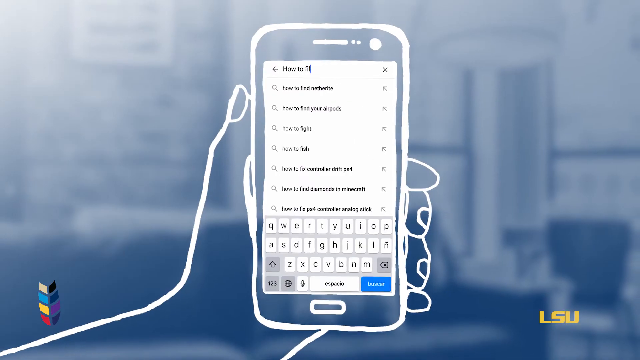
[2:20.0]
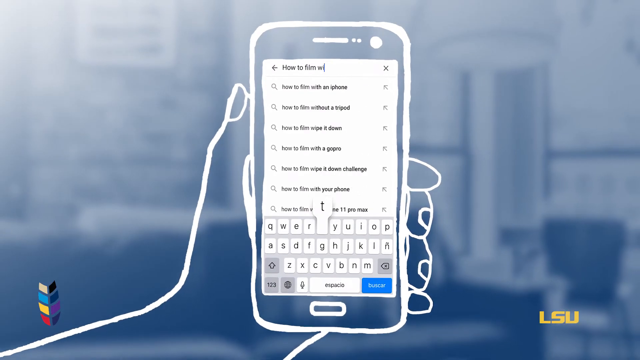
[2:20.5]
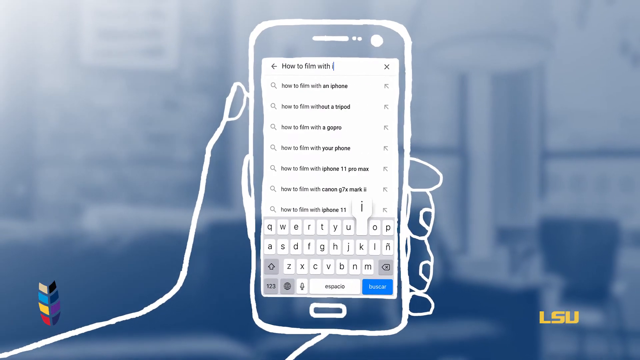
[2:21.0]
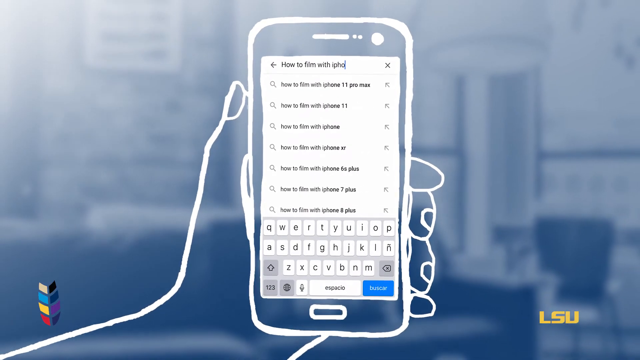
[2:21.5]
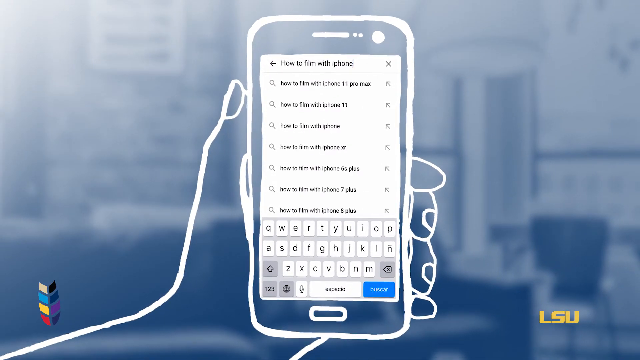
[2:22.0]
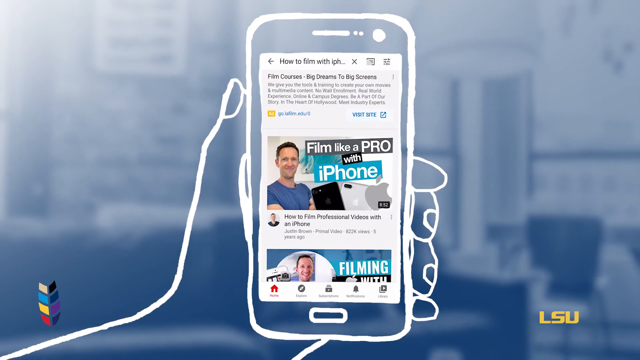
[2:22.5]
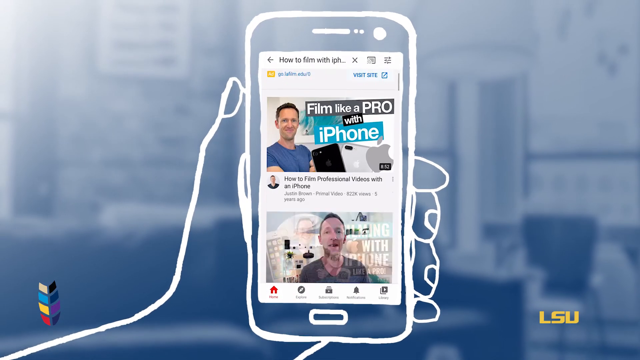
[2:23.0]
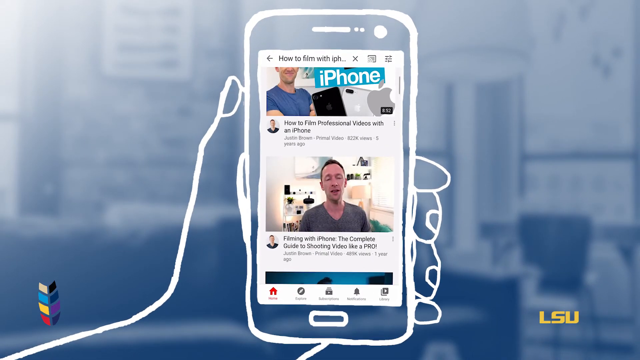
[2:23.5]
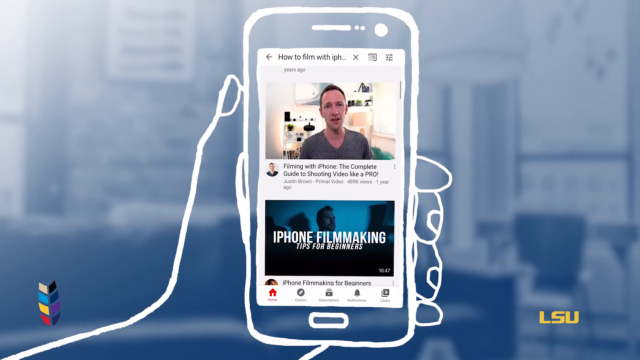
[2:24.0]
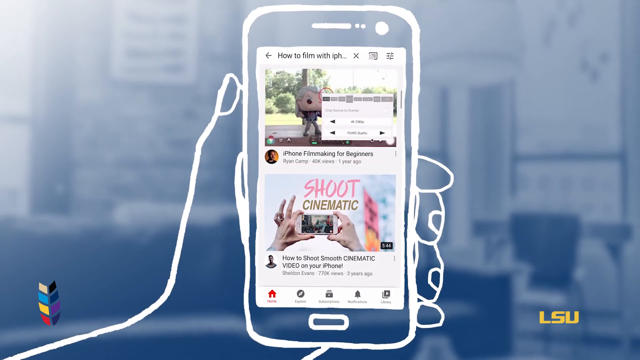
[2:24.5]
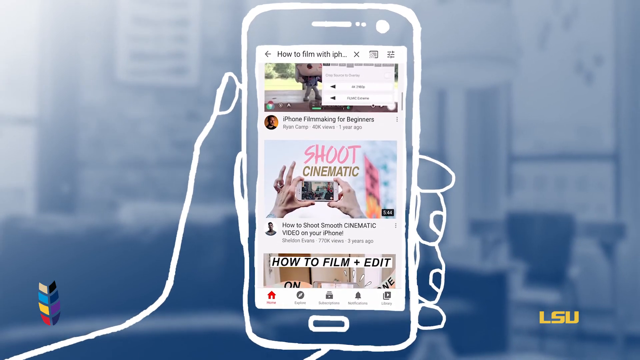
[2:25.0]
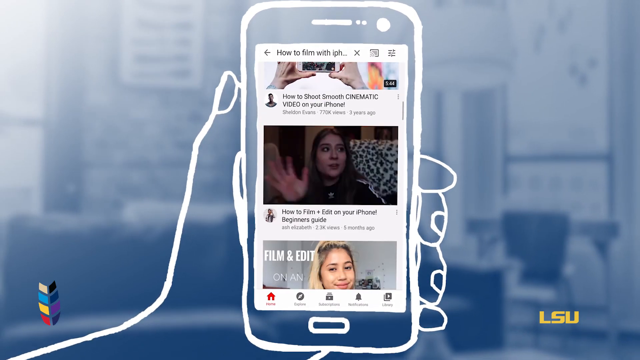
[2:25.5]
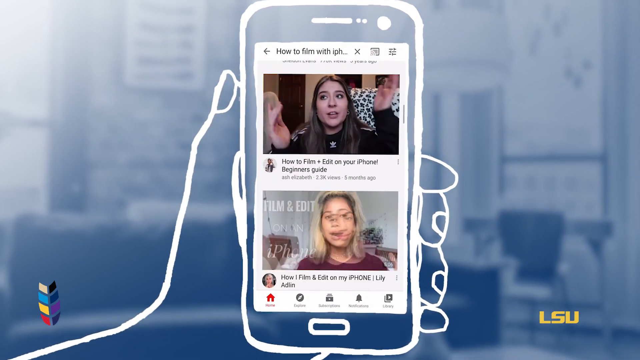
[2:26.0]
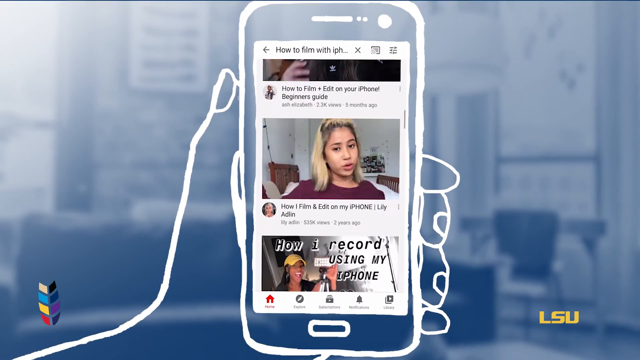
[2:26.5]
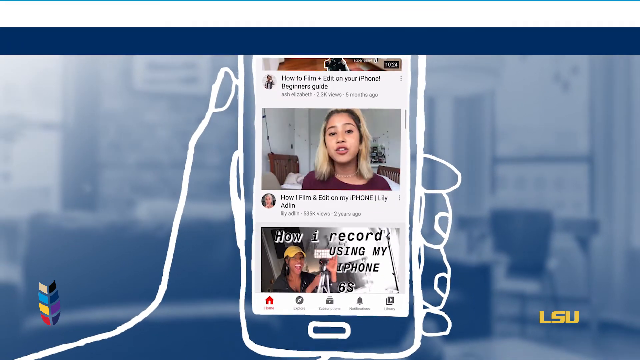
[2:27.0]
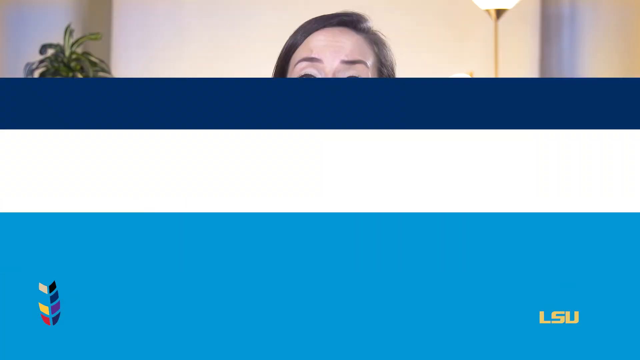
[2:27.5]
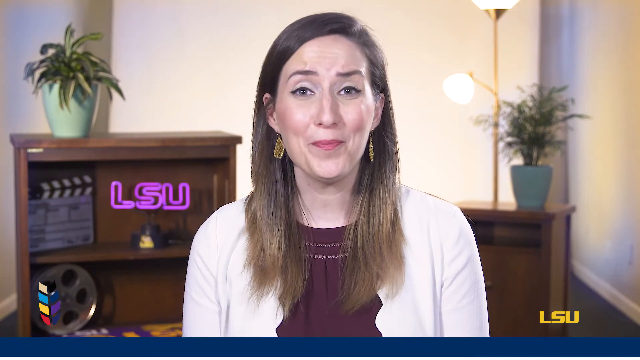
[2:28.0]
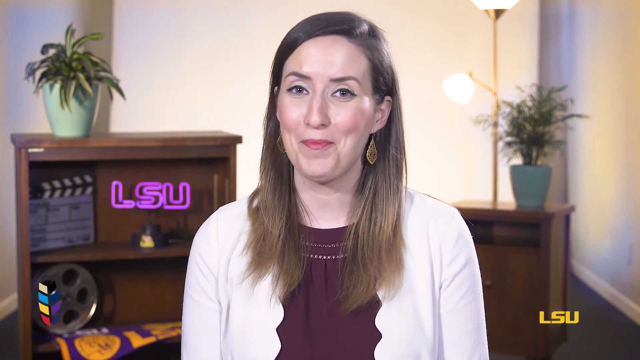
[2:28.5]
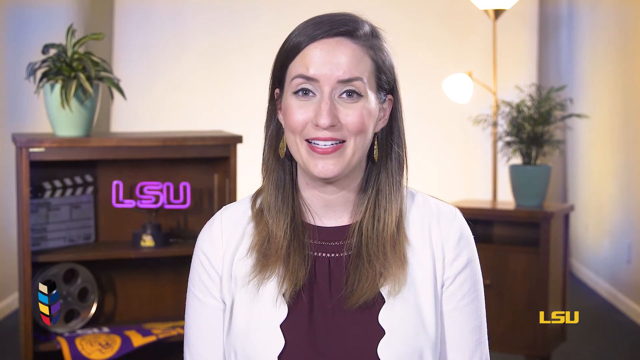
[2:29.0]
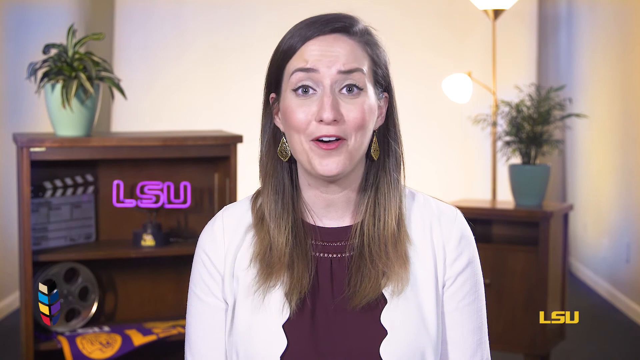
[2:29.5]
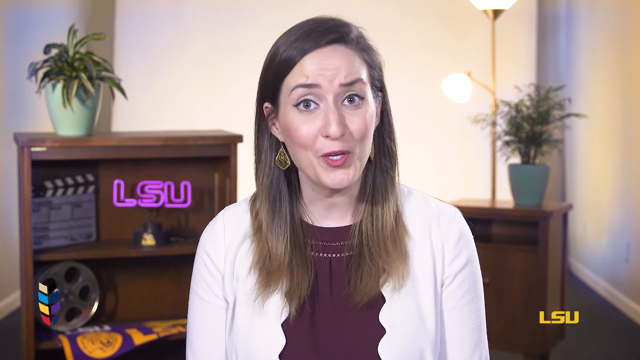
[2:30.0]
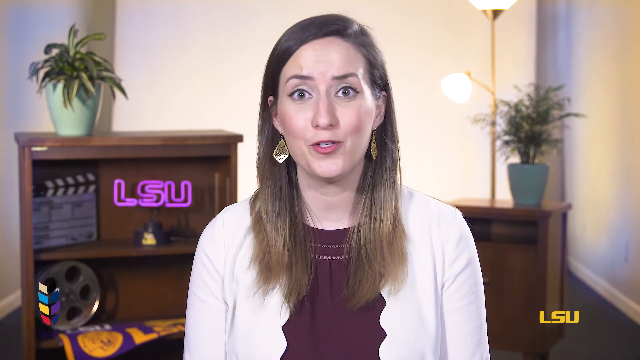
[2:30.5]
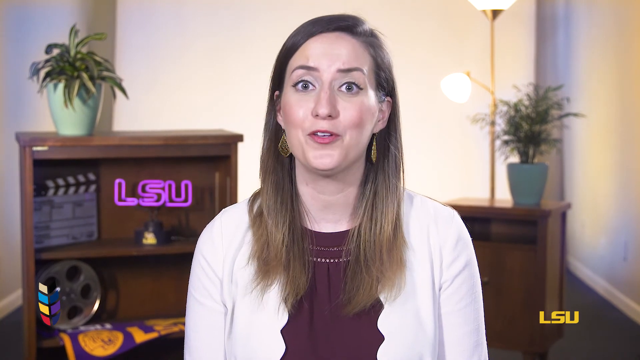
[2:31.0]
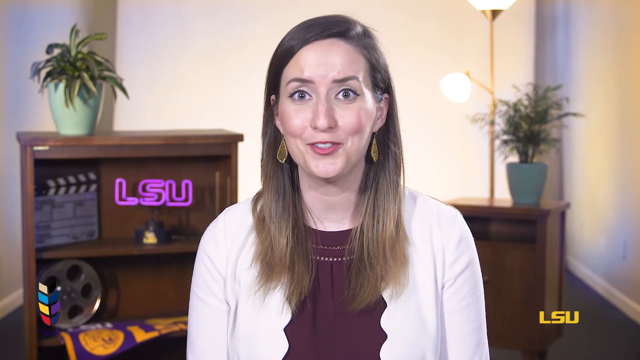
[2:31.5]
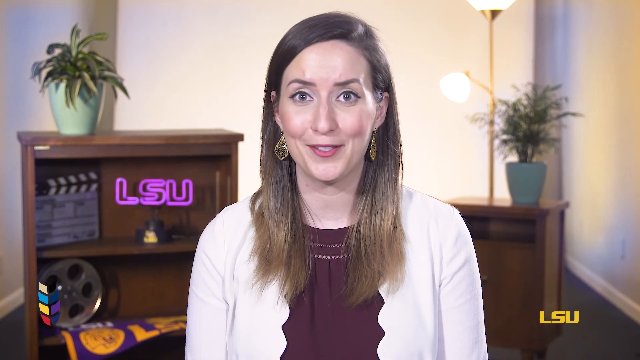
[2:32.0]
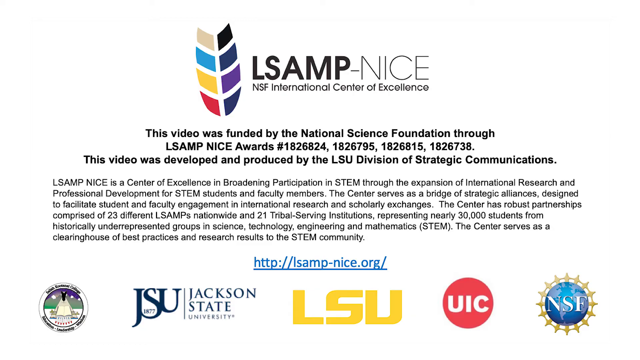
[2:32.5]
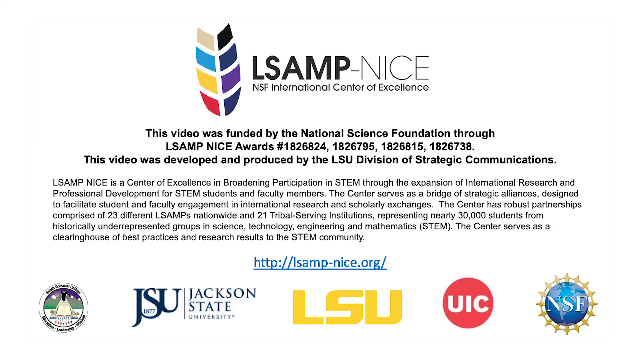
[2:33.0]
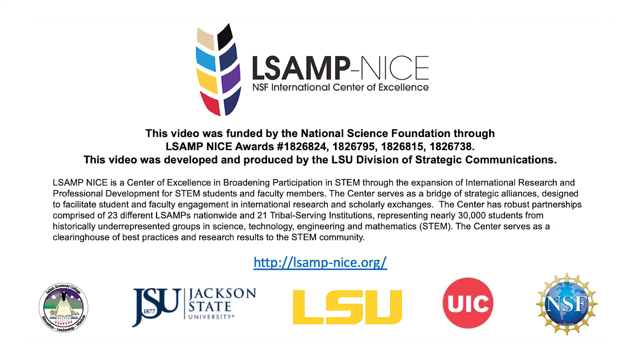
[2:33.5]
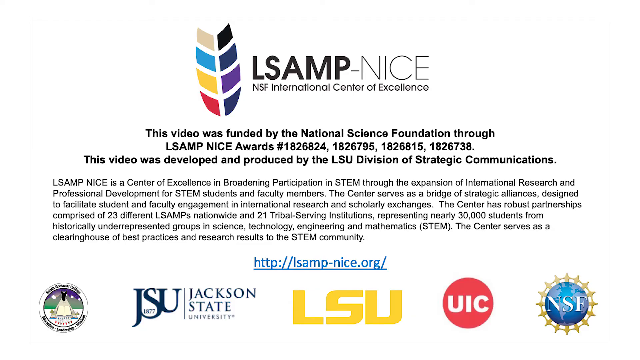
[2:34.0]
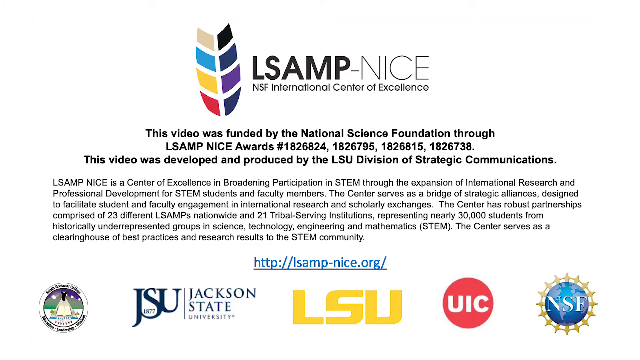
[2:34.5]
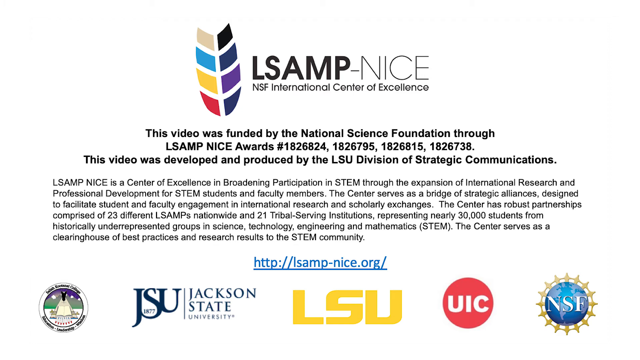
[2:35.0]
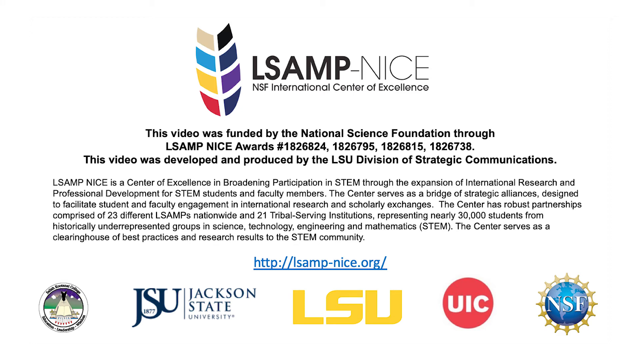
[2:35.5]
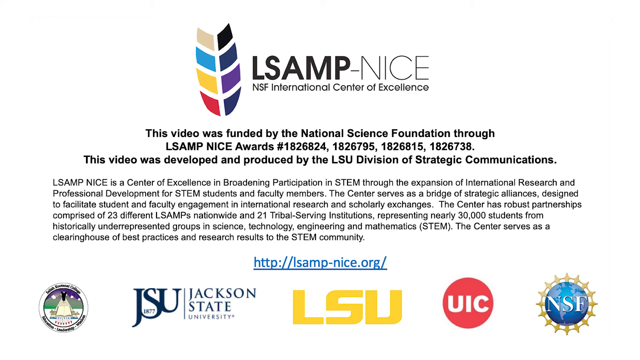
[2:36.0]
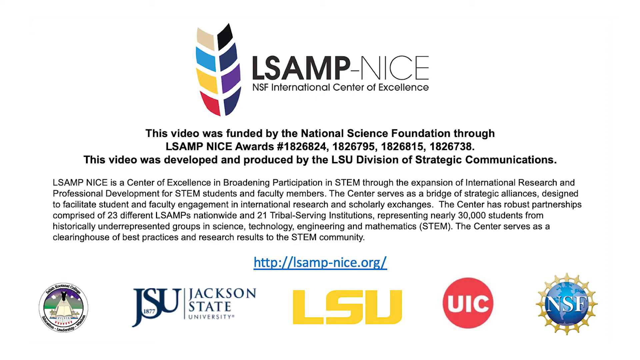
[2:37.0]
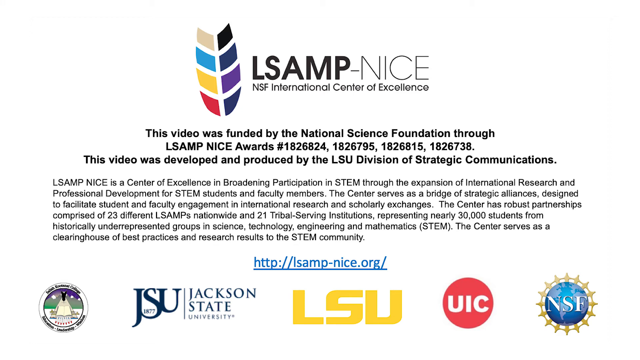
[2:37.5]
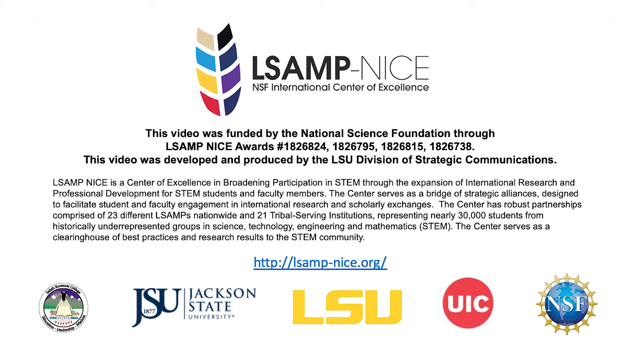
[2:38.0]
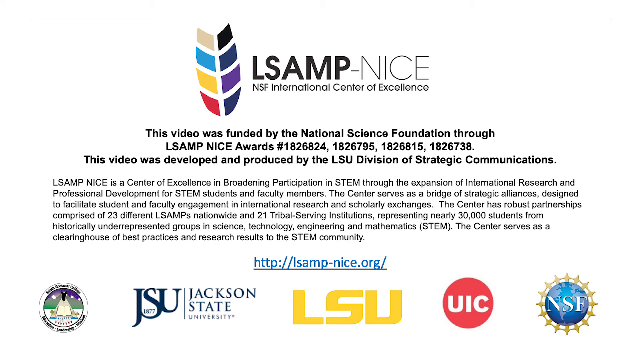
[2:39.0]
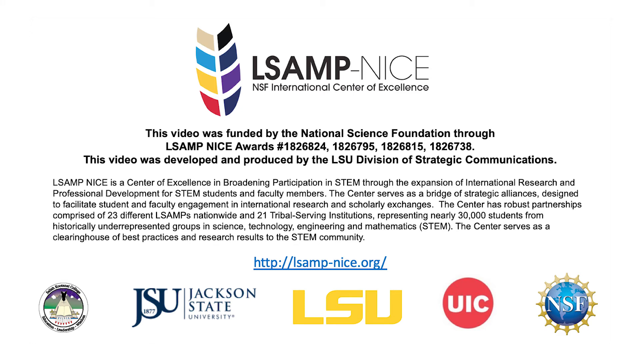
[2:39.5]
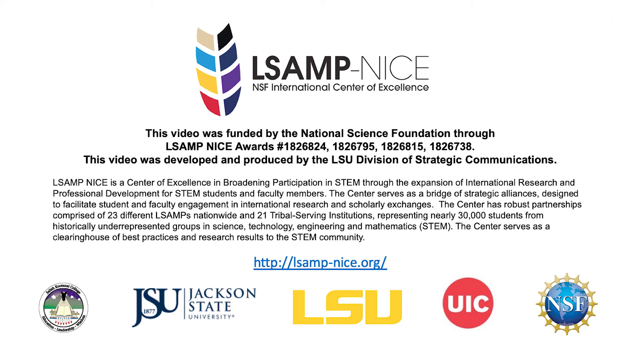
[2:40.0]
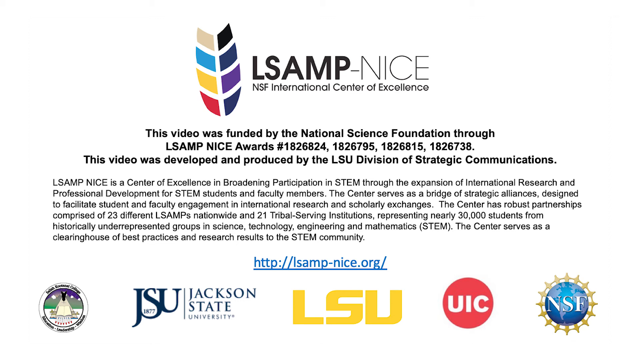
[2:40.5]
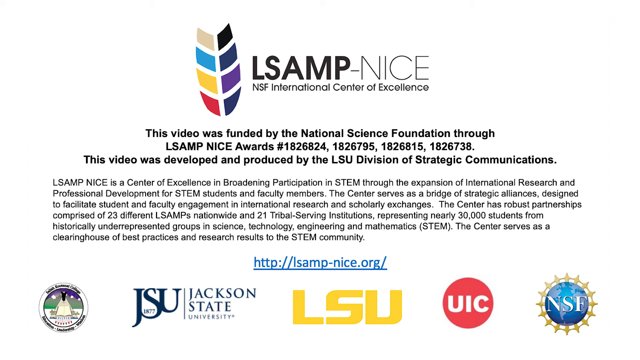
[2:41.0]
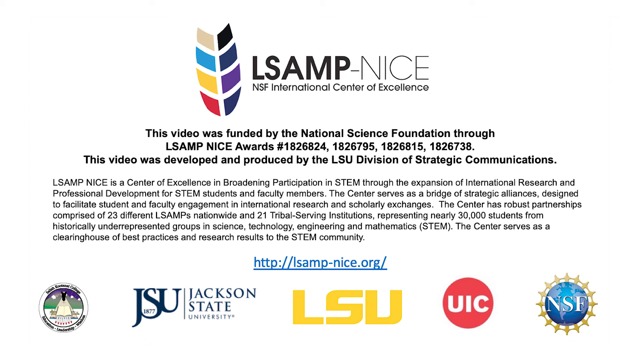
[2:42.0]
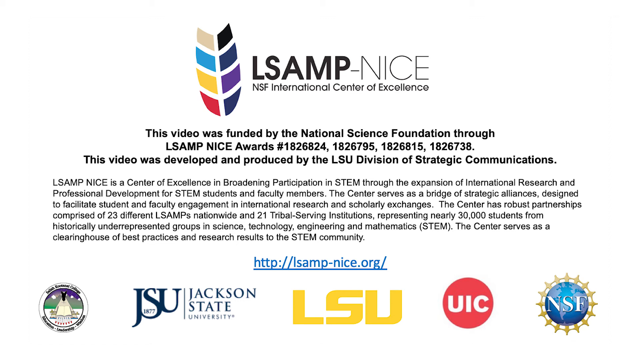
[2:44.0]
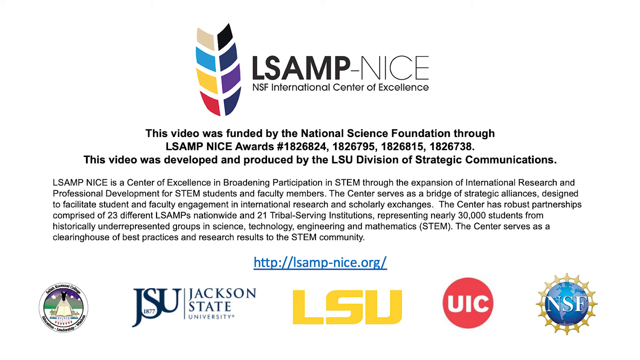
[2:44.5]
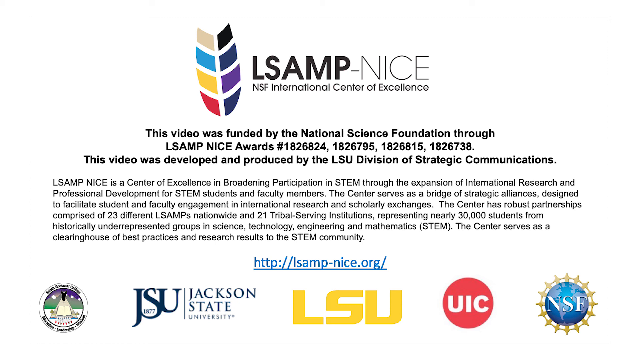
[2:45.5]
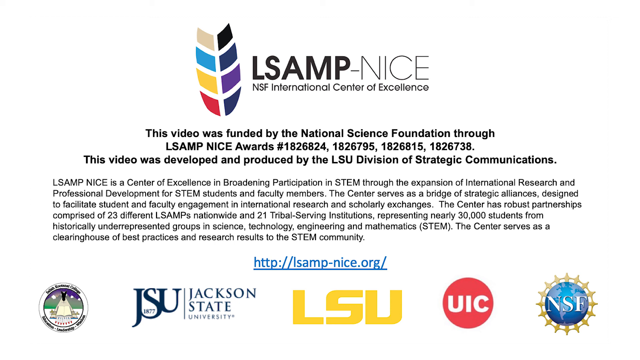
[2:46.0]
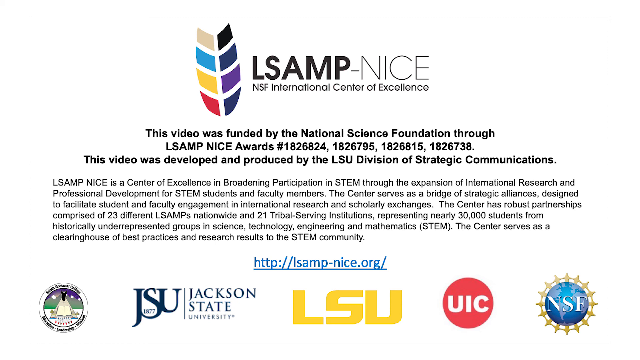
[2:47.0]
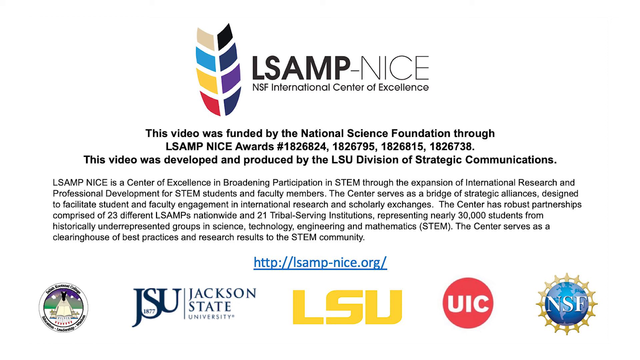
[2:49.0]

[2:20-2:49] A drawing of a hand holds a cell phone, with a real cell phone screen scrolling through. The video cuts to the narrator, a white woman with long brown hair, blue eyes and gold earrings, wearing a burgundy blouse with a white cardigan. A bookcase behind her to her right has a potted plant on it, along with movie set paraphernalia: a reel from a projector and a clapboard. There is also a little neon sign that says "LSU" and a purple and yellow pennant lying flat that appears to be from that school. On the viewer's left is a very small cabinet or bookcase with another potted plant on it, and behind that a gold floor lamp illuminates the room. The end is a credit screen with "lsamp-nice" at the top and a multicolored feather logo.